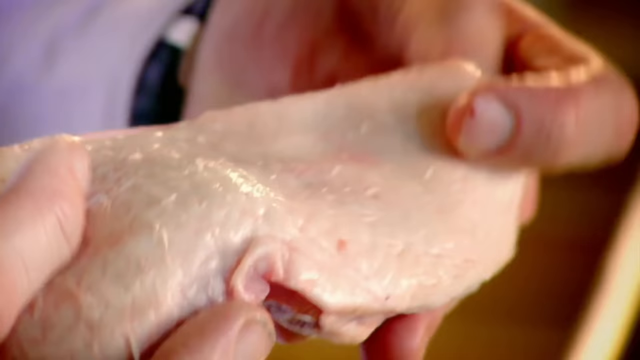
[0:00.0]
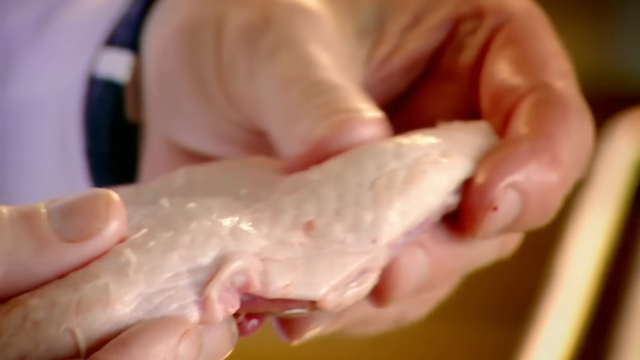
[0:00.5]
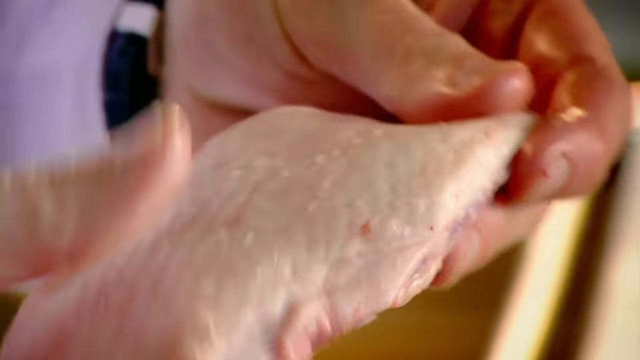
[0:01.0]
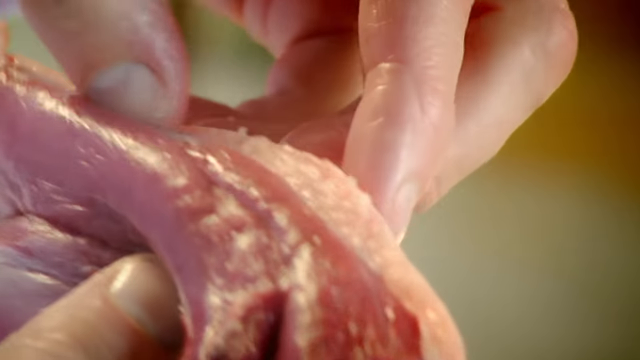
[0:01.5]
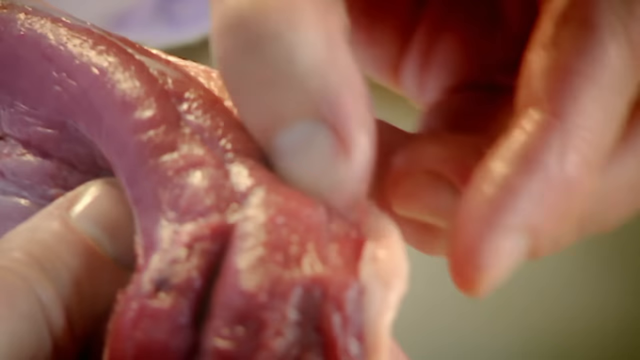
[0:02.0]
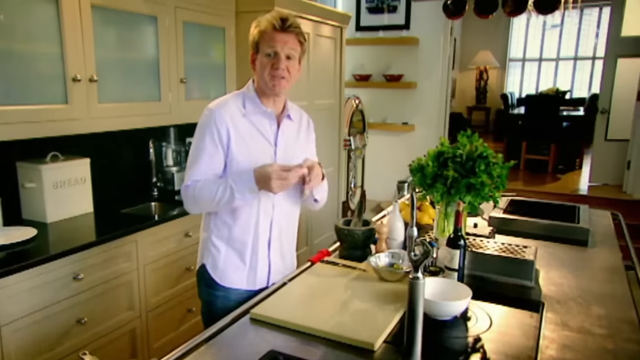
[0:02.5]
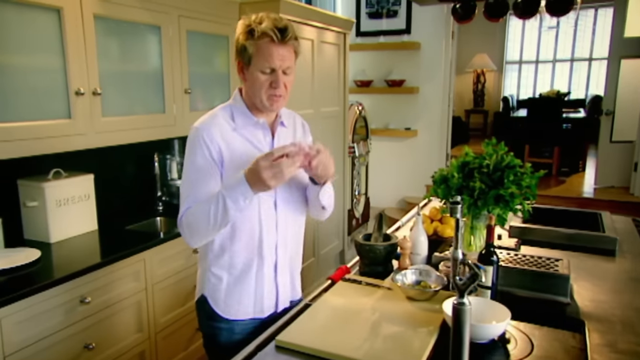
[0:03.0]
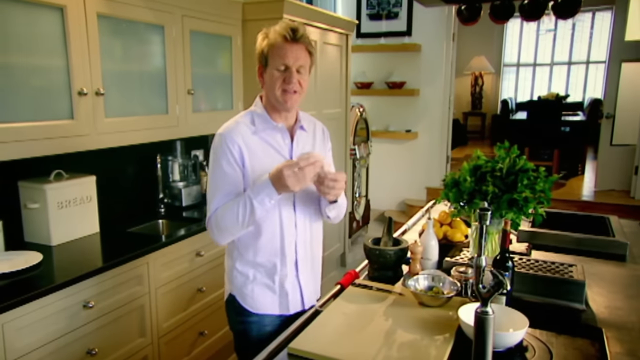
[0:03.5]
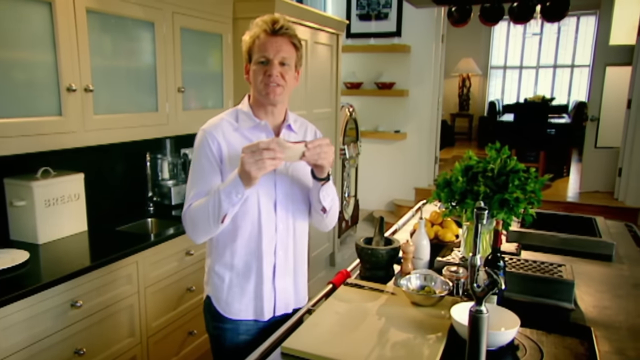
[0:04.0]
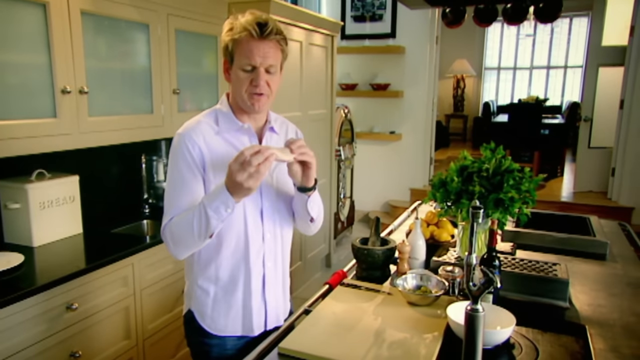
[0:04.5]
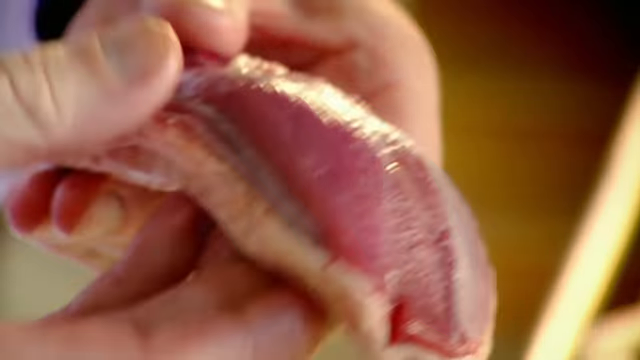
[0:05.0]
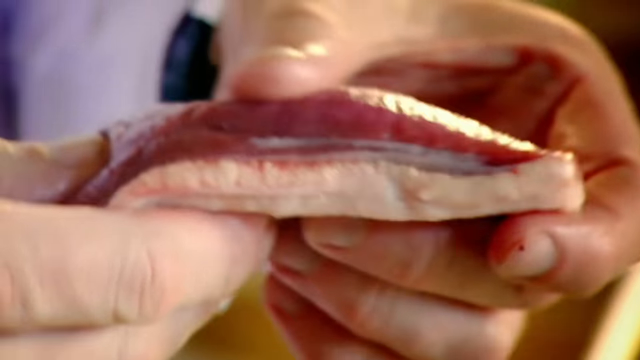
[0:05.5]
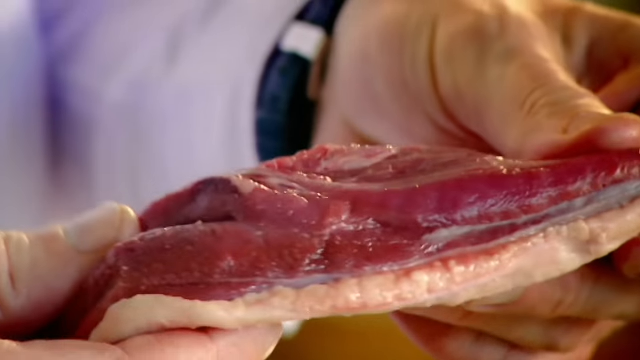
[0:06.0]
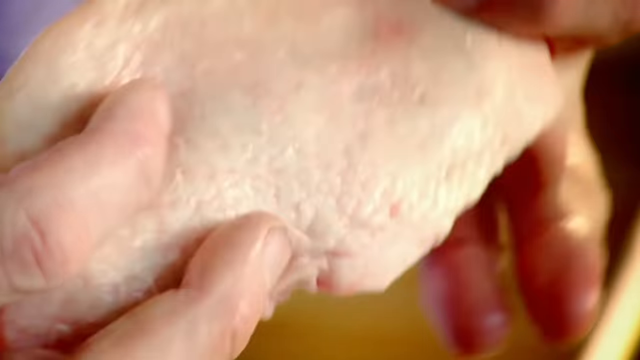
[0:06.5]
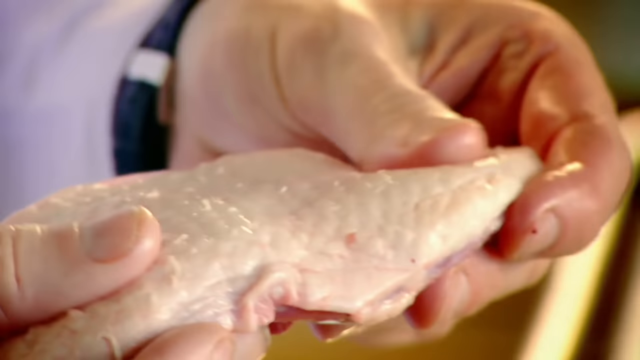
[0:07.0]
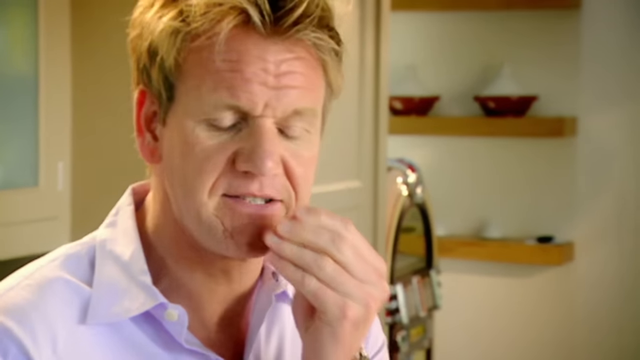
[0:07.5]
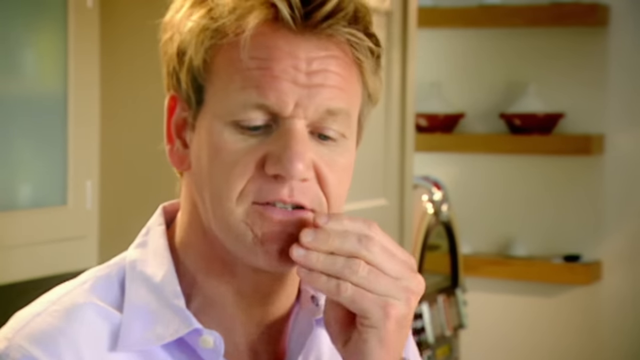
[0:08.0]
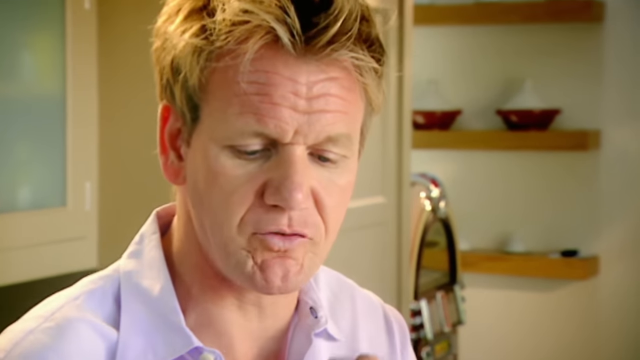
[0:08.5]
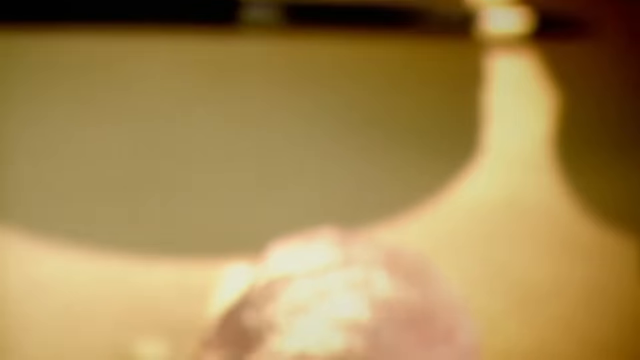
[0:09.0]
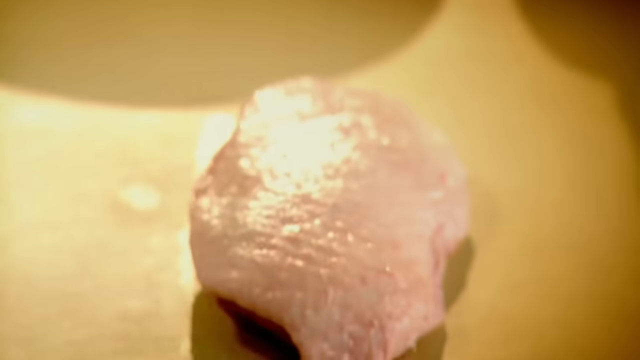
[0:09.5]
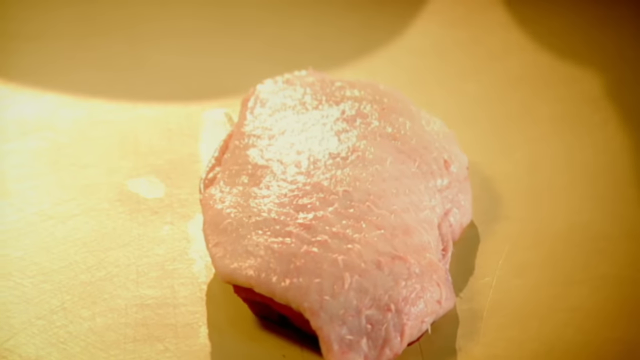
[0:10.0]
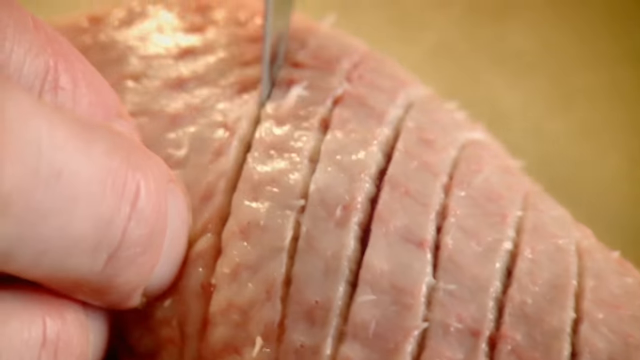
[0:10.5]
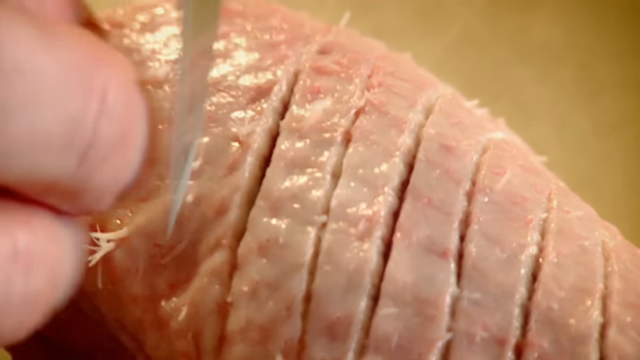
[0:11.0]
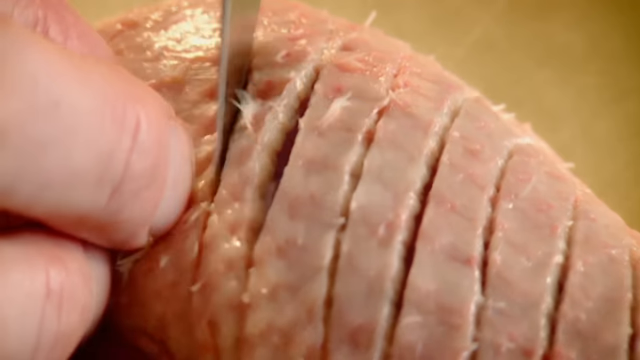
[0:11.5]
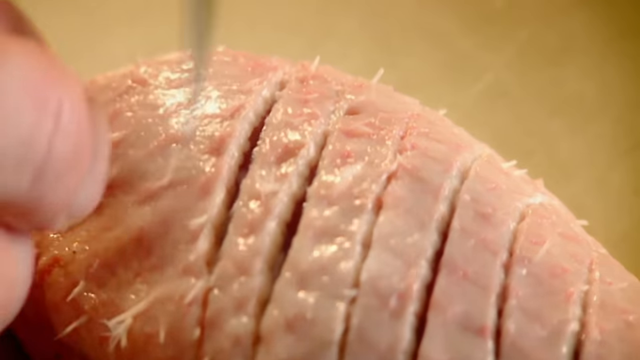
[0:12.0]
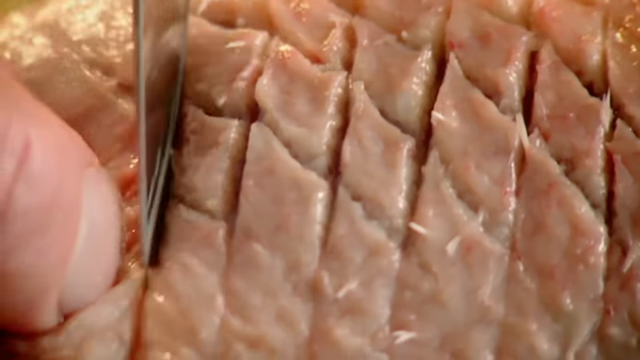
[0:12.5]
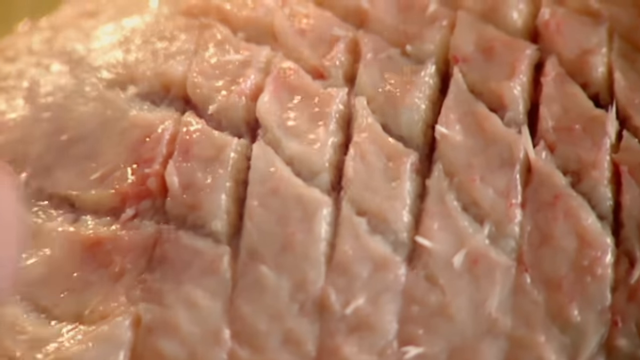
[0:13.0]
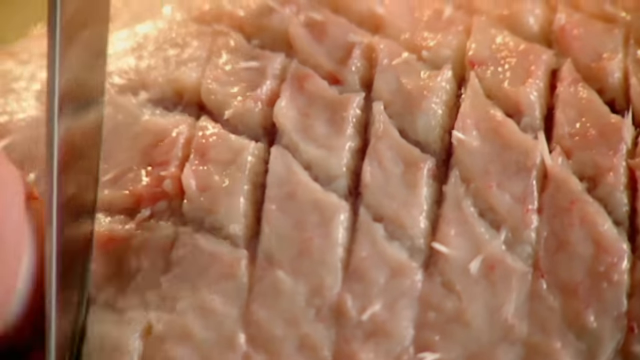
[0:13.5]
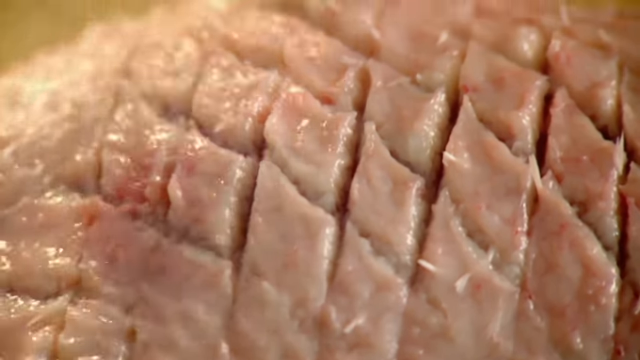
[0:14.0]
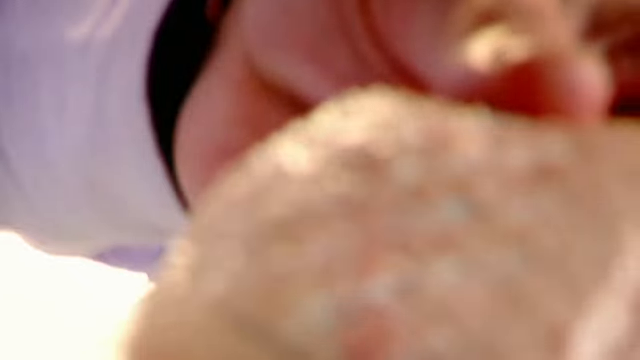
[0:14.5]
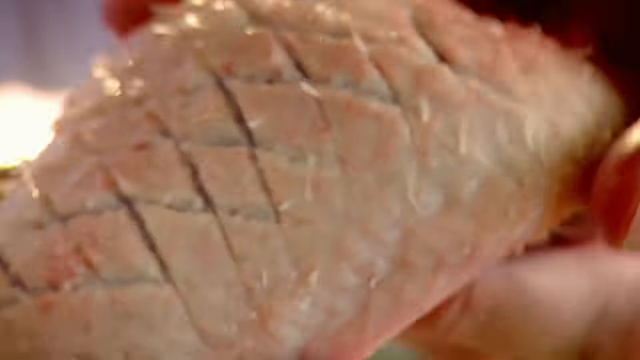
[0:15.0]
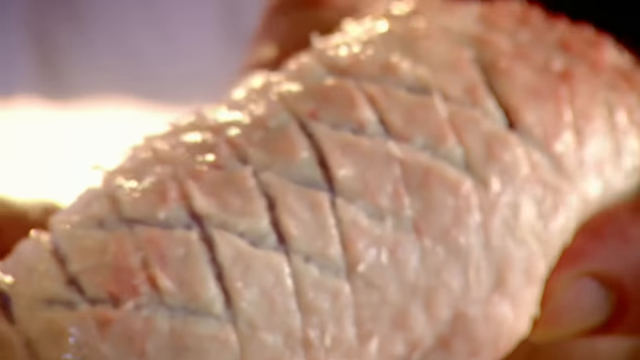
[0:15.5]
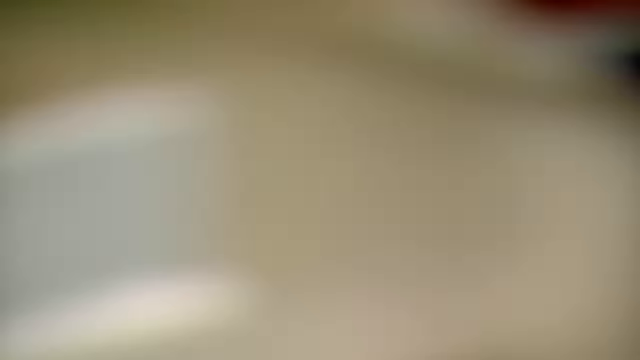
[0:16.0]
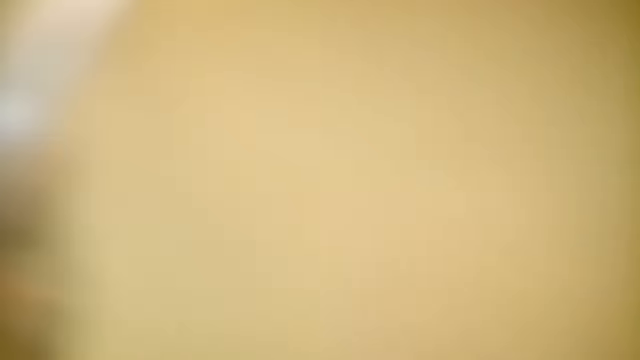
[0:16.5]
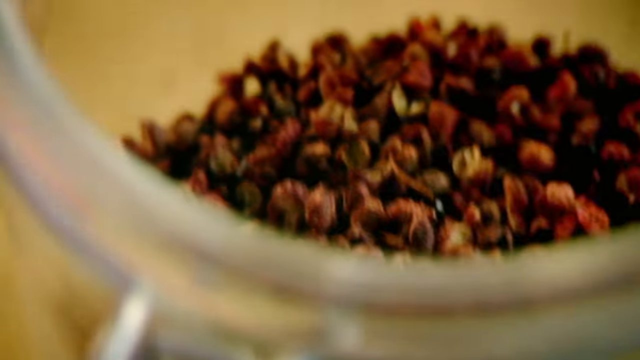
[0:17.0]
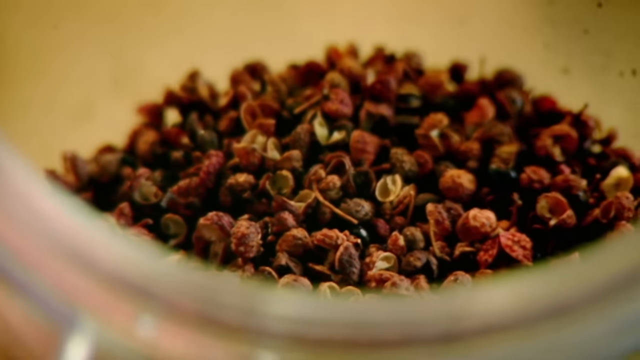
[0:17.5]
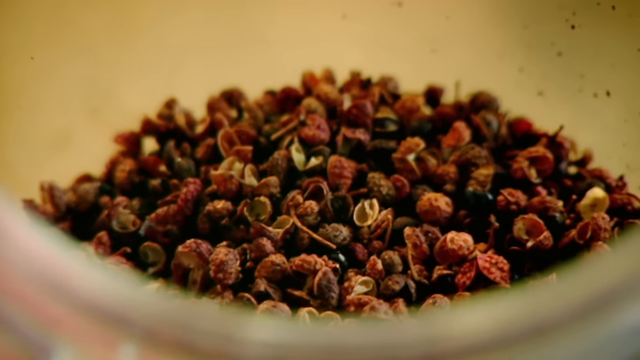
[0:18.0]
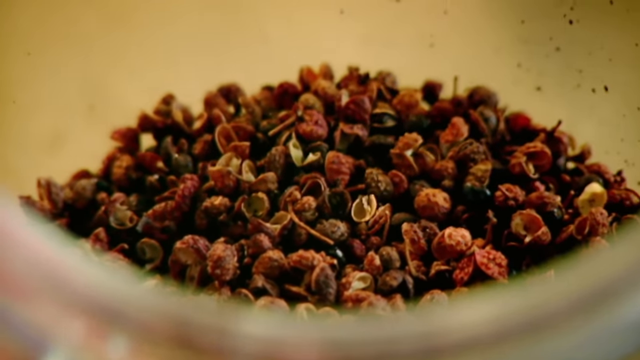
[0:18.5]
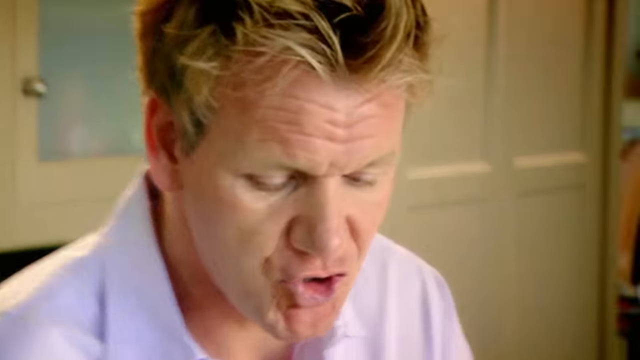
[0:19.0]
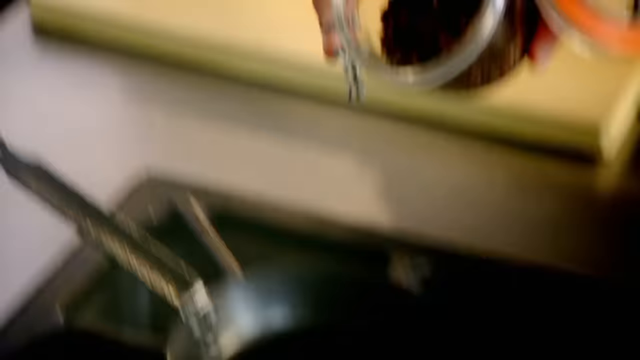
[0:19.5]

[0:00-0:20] A close-up shows two hands holding a steak with a thick layer of skin and red meat. The man brushes the steak with his hands on the parts that show the skin. The camera then shows him from his upper body; he is wearing pink pants and blue jeans and has a watch on his left hand. The camera focuses on the steak again as he cuts a little into the skin, not too much, making a pattern. As he does this, he talks, looking at the camera and then back at the steak.